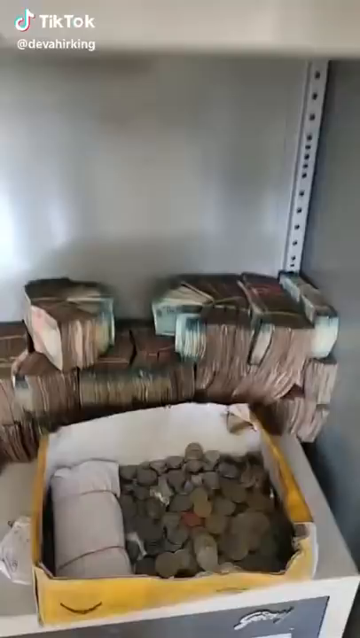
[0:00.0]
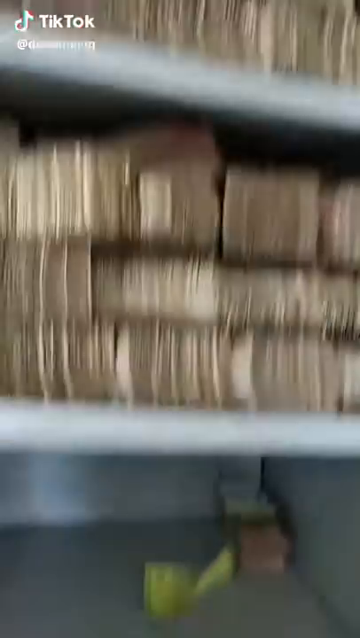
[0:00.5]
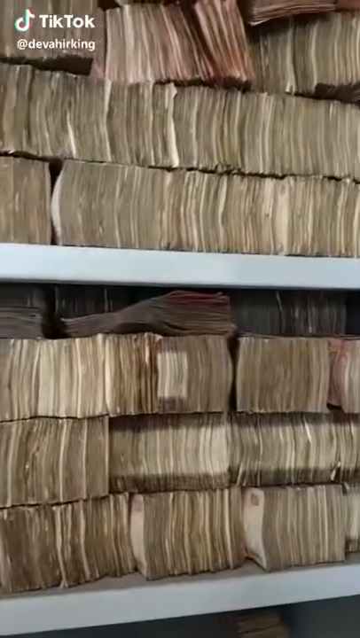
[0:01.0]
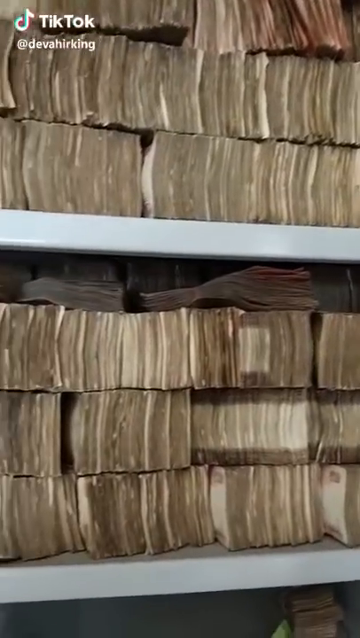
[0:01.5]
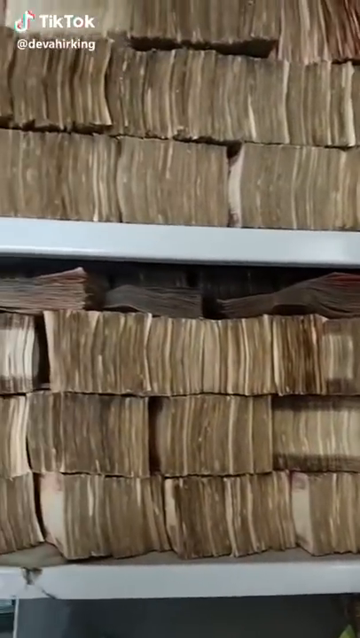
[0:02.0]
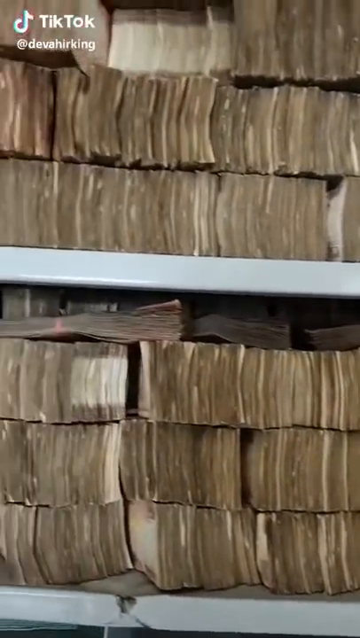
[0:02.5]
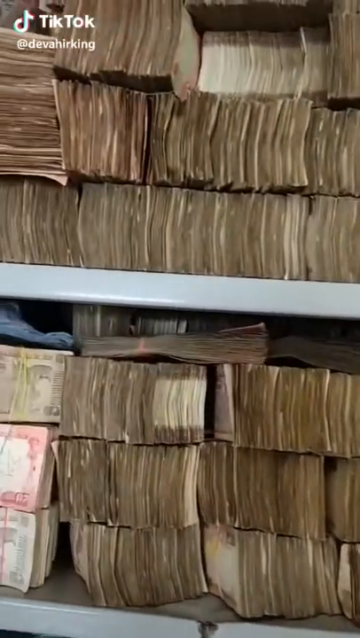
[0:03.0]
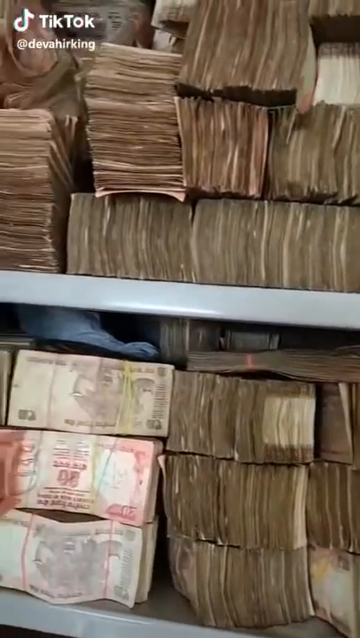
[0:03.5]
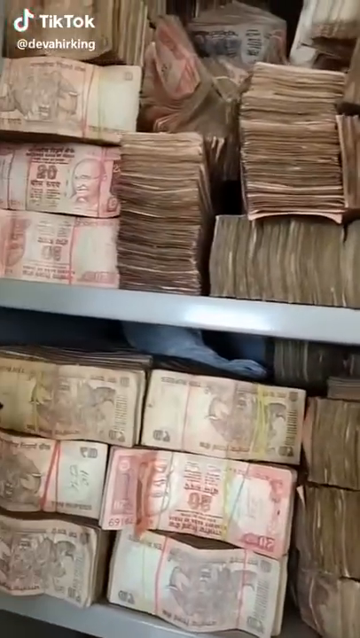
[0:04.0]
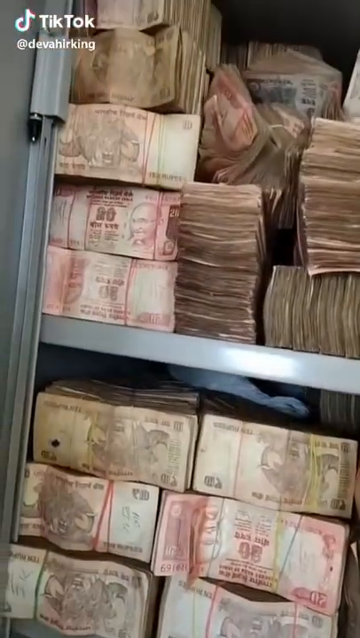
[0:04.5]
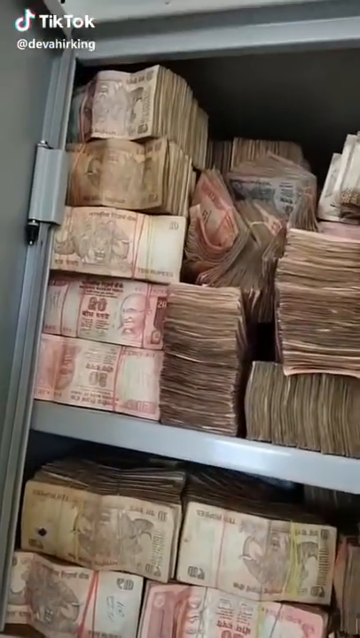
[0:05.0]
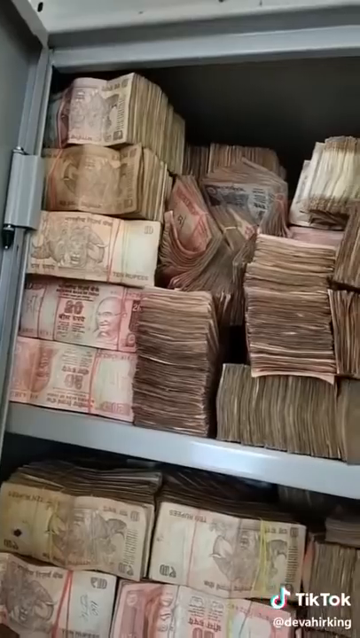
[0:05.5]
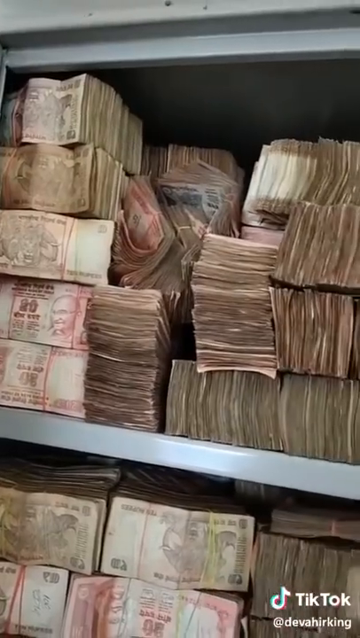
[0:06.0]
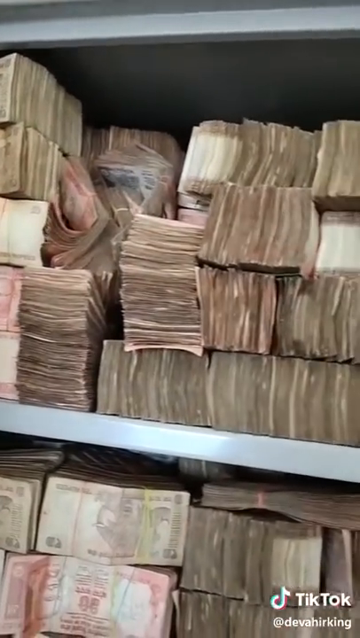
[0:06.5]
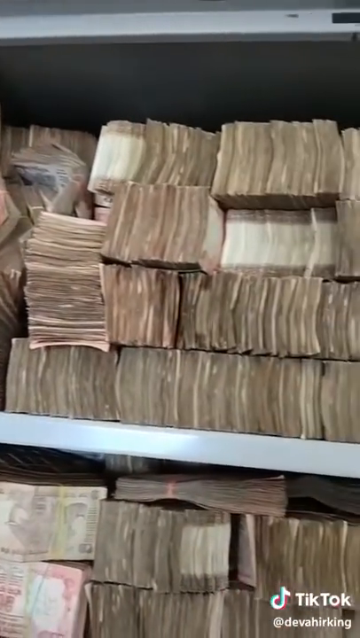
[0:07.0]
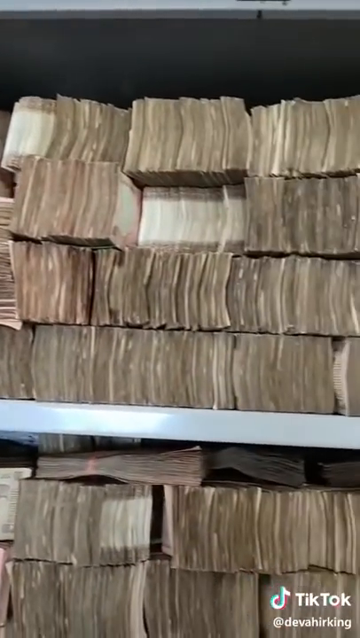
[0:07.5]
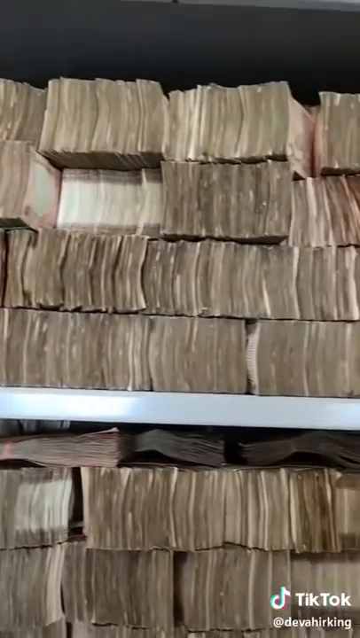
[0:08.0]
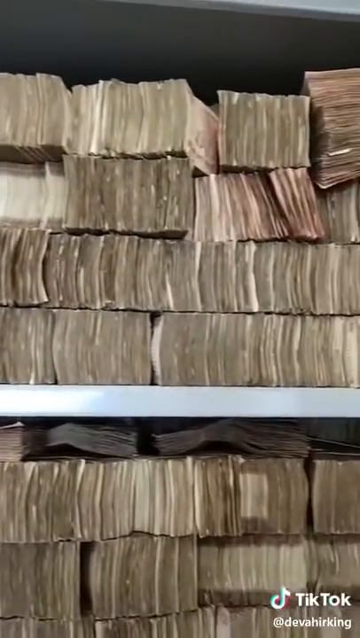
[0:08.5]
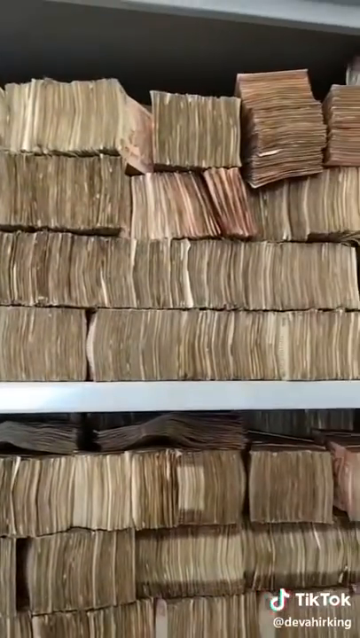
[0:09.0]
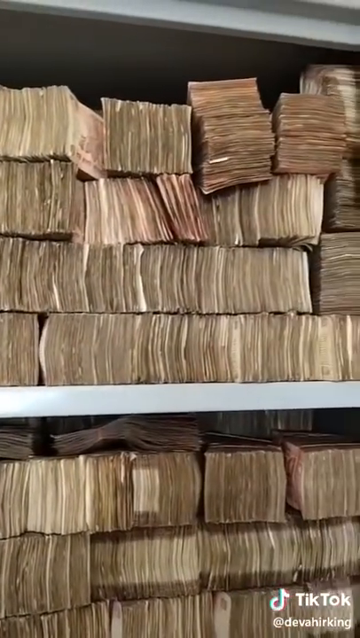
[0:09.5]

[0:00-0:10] A gray metal file cabinet with several shelves is stuffed on each shelf with several stacks of paper money, apparently bundled together with rubber bands. In some cases the stacks are arranged neatly, while in other places they are sort of messy, with stacks falling over. The video begins on the bottom shelf, quickly pans upward to the top shelf, and then moves from left to right. The lower shelves appear more empty, while the higher shelves are jam-packed with paper money. The paper is sort of a cream color, and some stacks face forward, showing red ink in some cases and maybe green or brown ink. The money looks very old, worn and used rather than new. In the upper left corner are the TikTok logo and the word "TikTok."